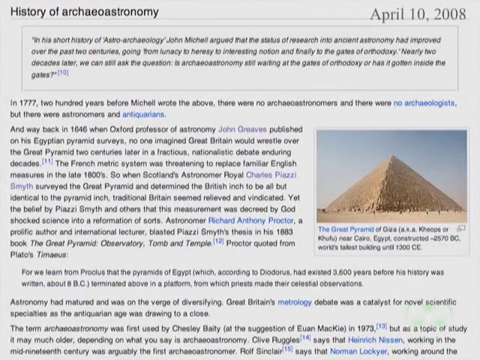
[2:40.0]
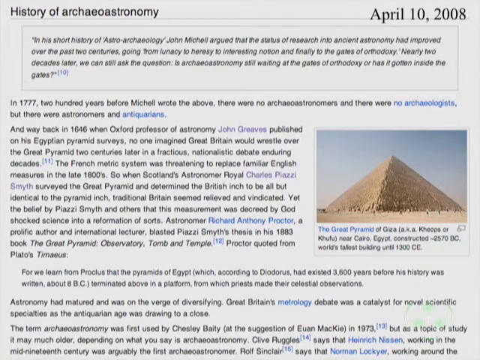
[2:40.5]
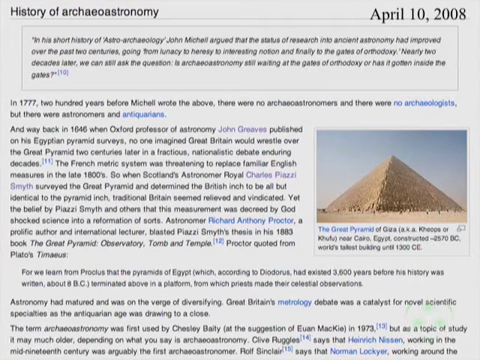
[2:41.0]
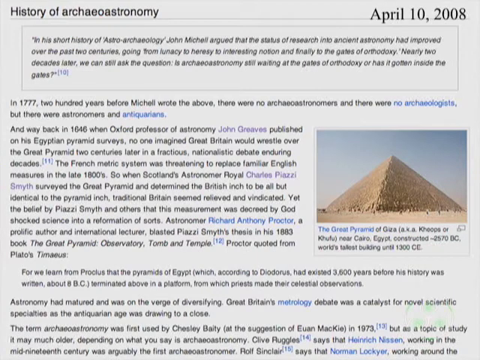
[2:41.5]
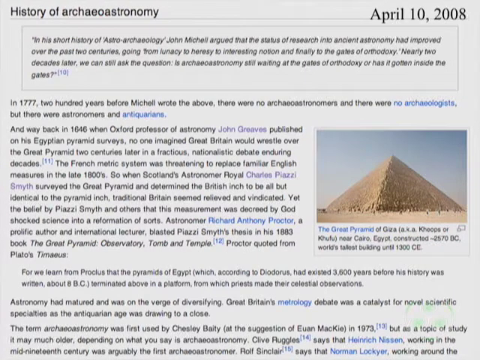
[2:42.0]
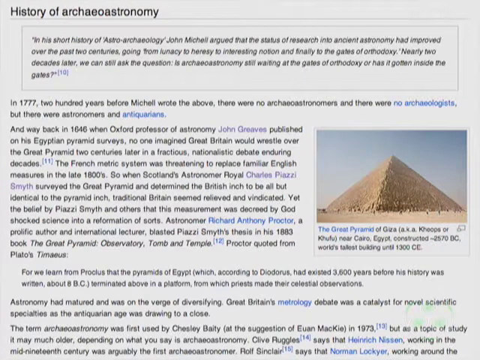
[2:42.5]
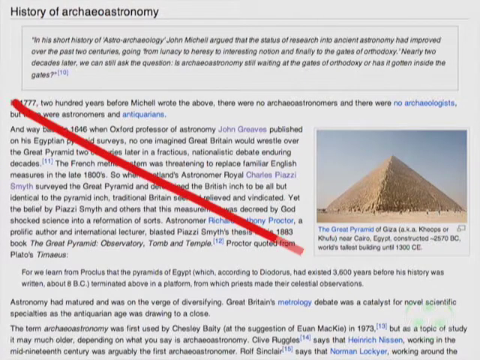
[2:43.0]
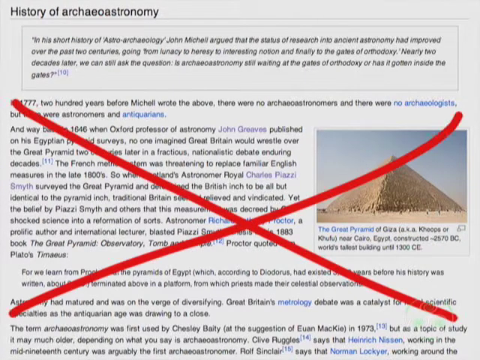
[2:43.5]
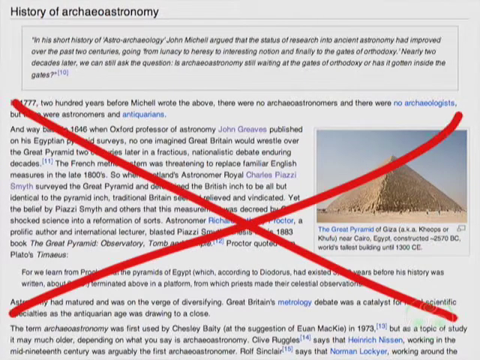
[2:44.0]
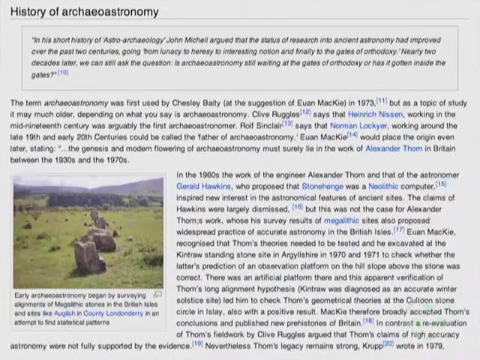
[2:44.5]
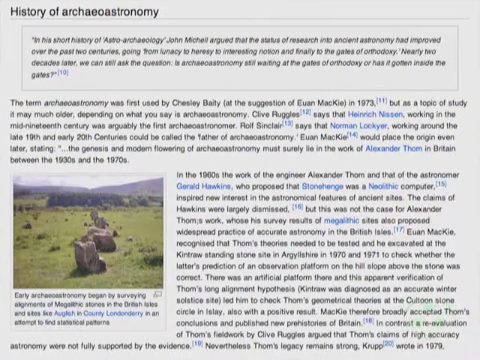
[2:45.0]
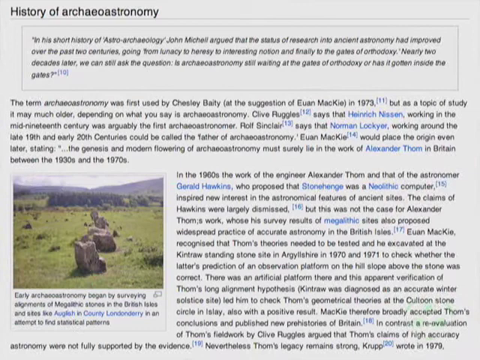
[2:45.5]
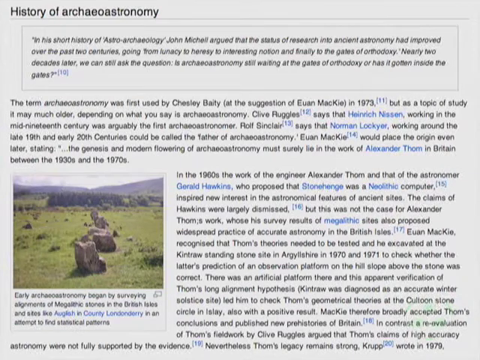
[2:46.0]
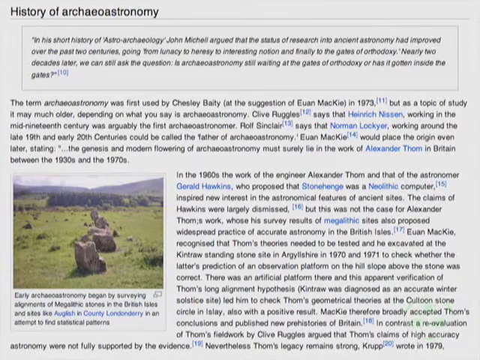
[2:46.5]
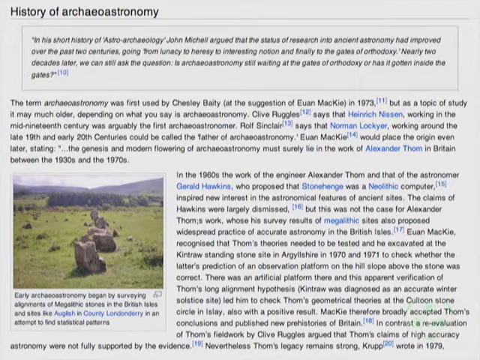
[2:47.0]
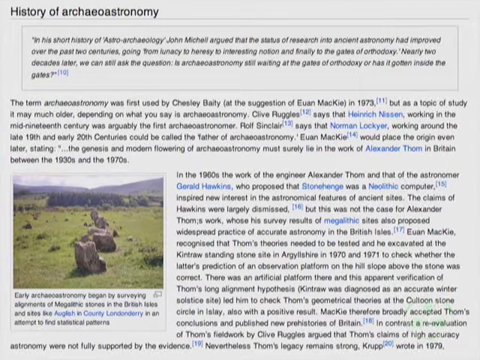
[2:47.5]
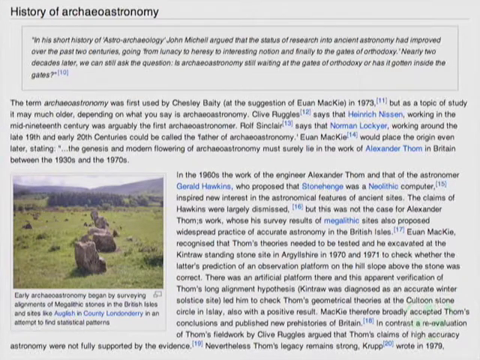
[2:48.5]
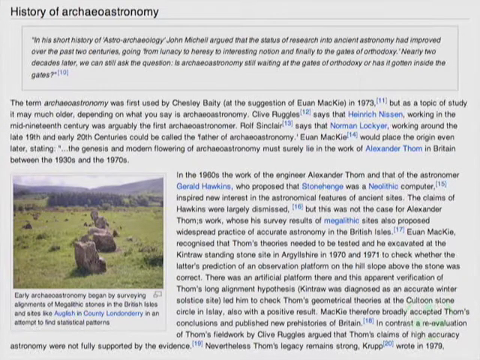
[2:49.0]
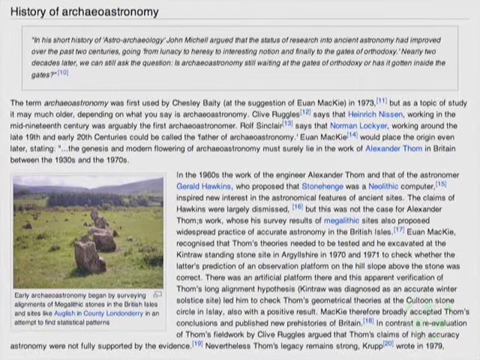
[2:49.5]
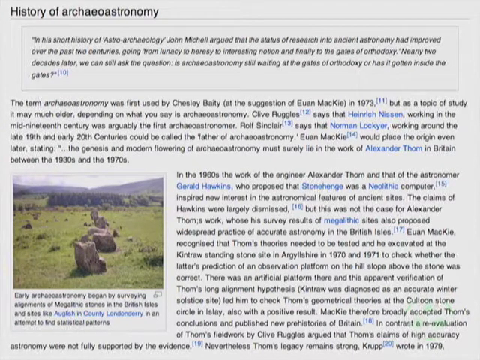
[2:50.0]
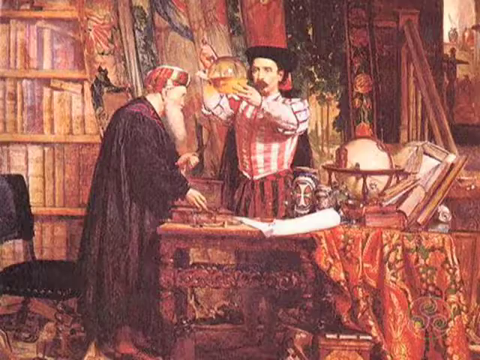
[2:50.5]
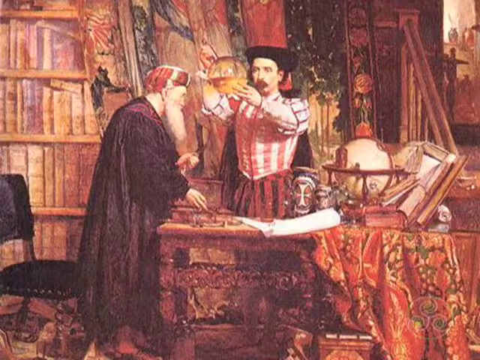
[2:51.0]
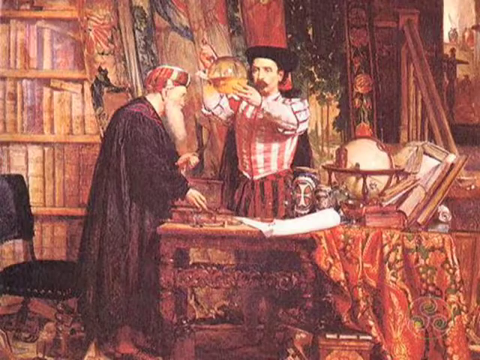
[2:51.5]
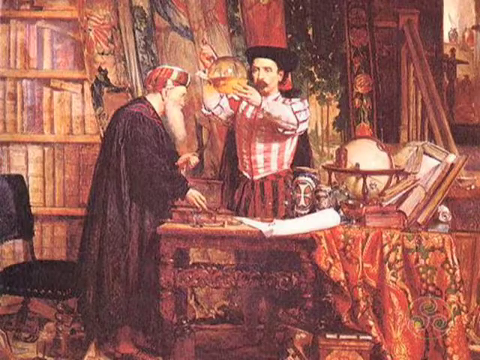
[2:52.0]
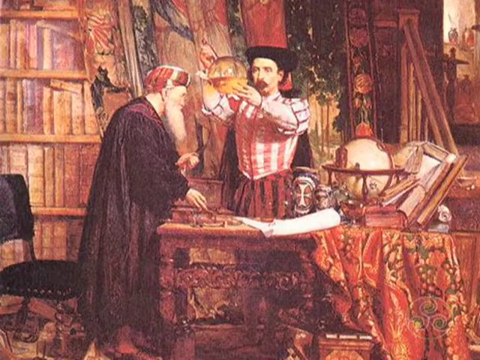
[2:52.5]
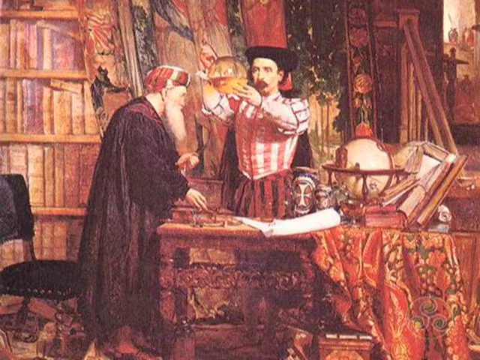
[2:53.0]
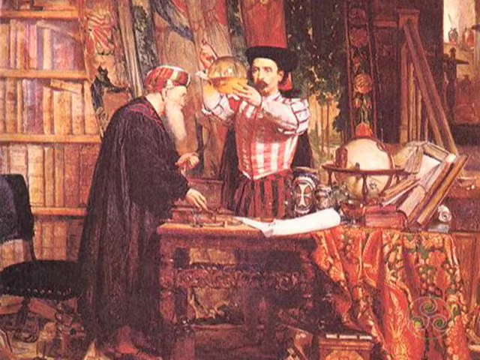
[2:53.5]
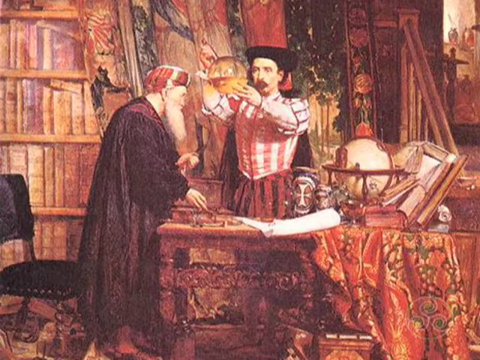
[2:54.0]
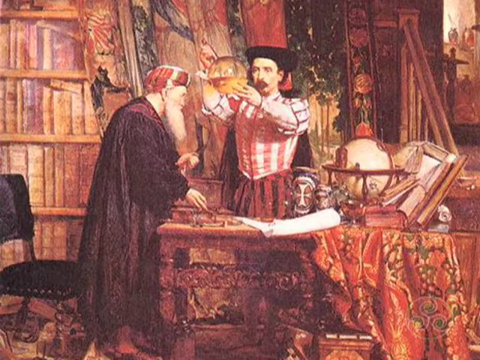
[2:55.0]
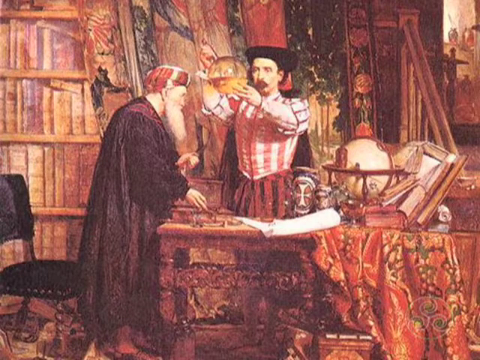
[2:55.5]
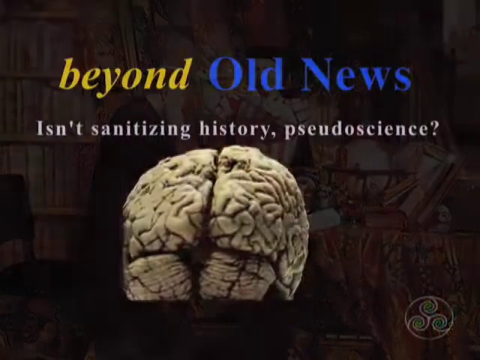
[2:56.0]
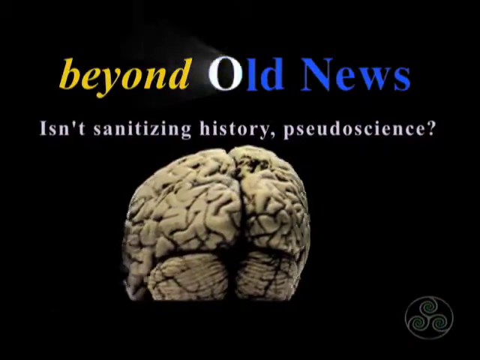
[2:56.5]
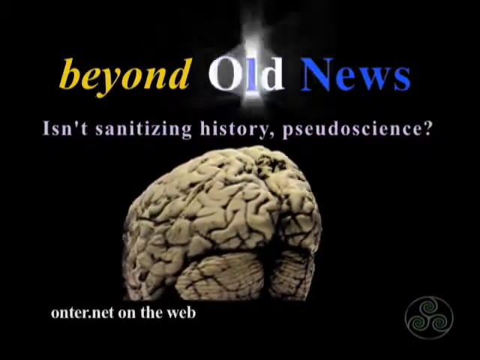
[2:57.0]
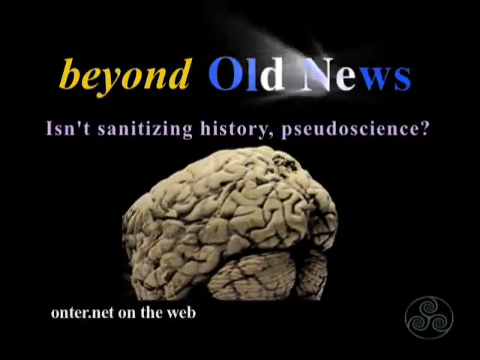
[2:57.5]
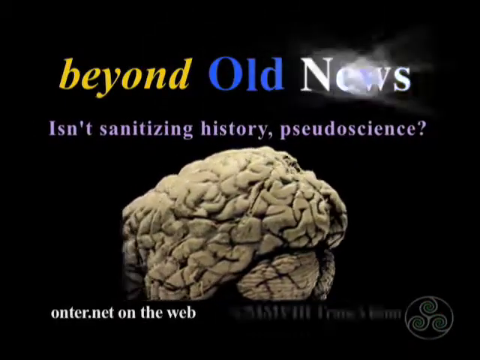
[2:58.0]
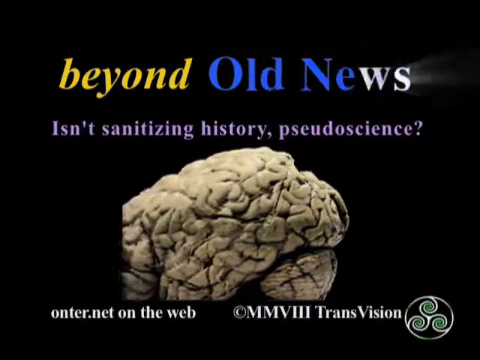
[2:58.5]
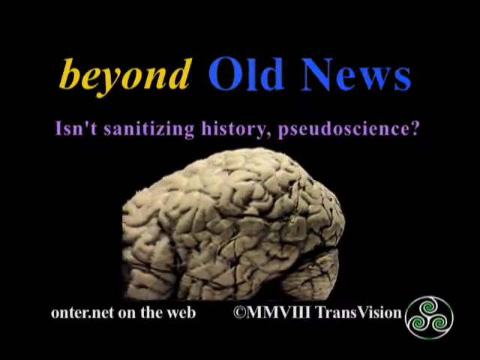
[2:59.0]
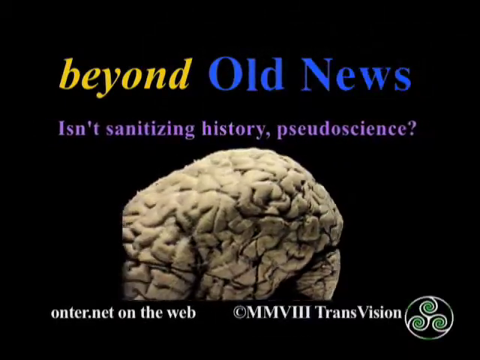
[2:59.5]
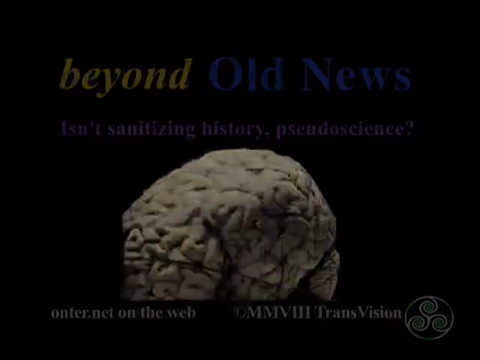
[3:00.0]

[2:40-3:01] An archaeoastronomy page that looks much like a Wikipedia page, a combination of images and text, is shown, and something red flashes across it. The video then quickly transitions through other scenes, one after another.